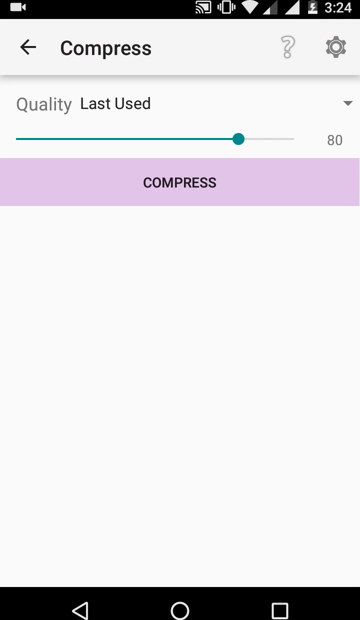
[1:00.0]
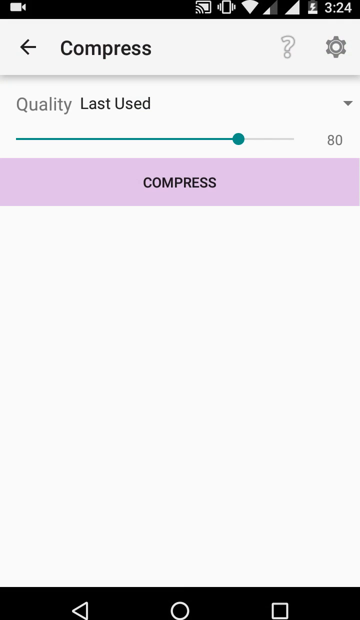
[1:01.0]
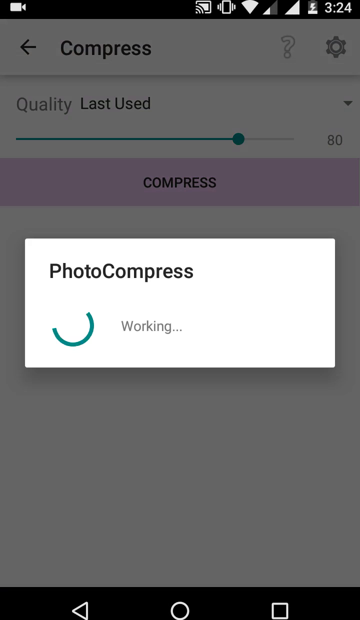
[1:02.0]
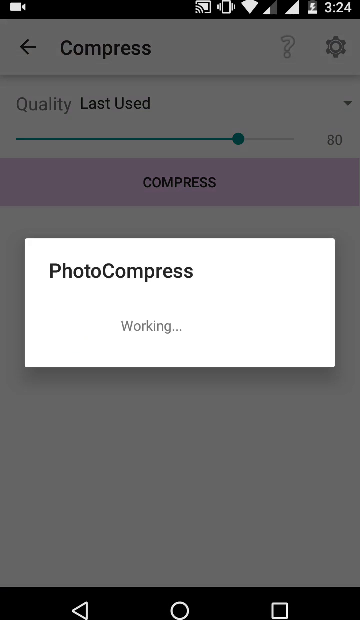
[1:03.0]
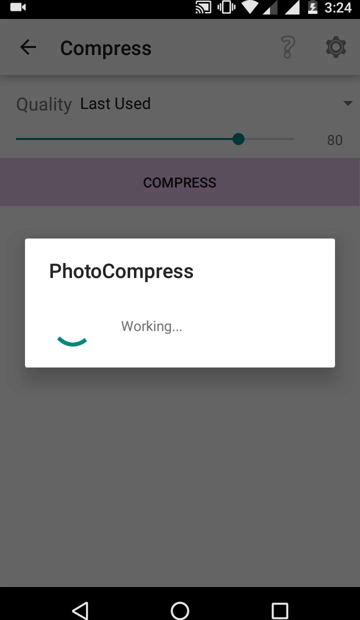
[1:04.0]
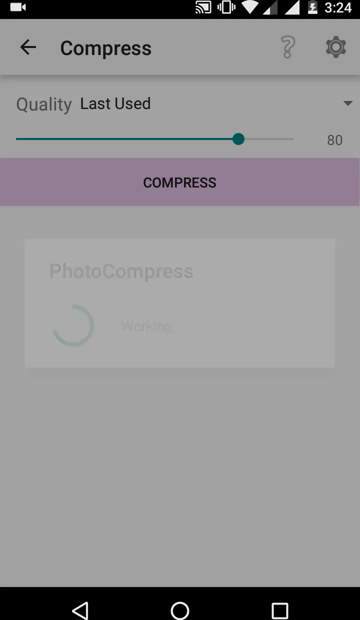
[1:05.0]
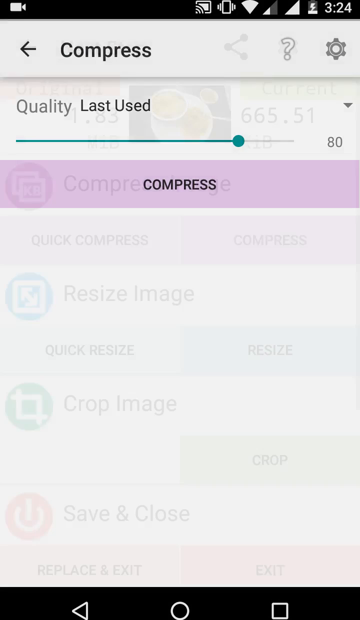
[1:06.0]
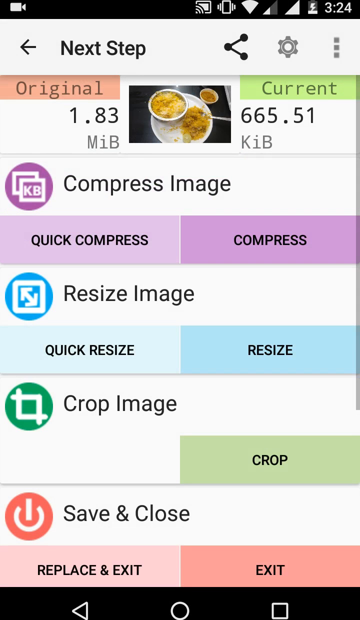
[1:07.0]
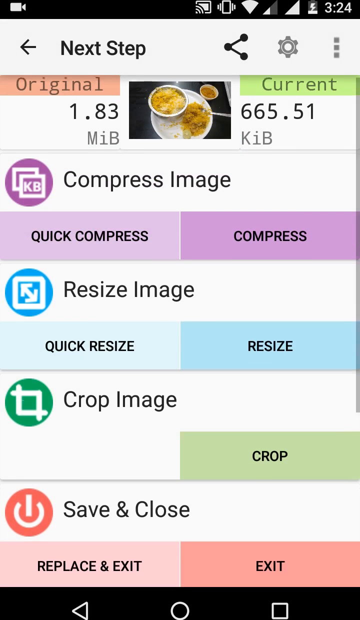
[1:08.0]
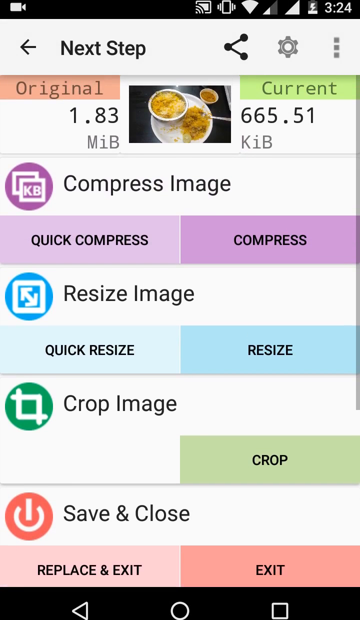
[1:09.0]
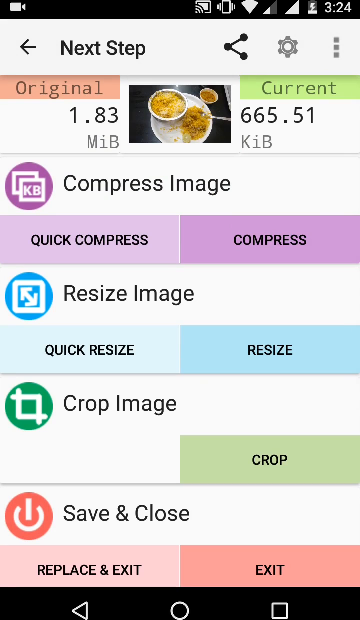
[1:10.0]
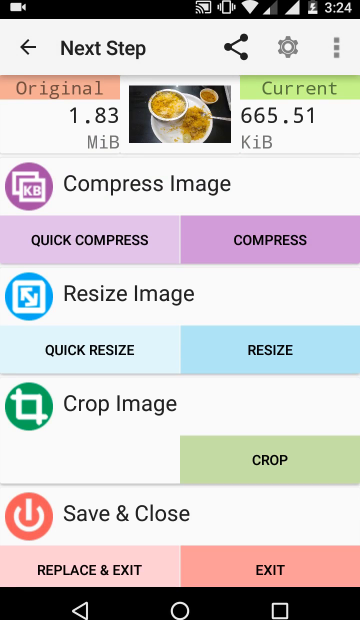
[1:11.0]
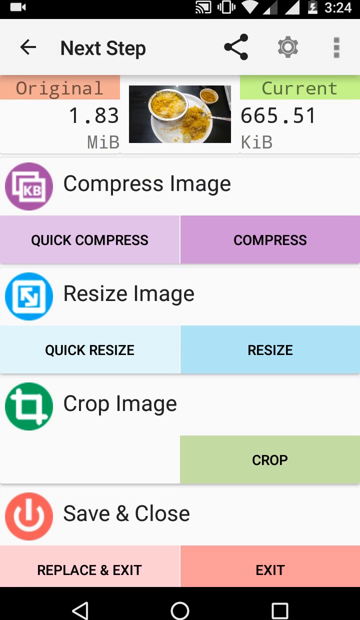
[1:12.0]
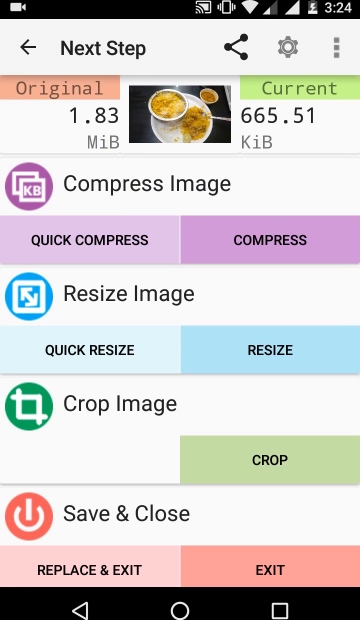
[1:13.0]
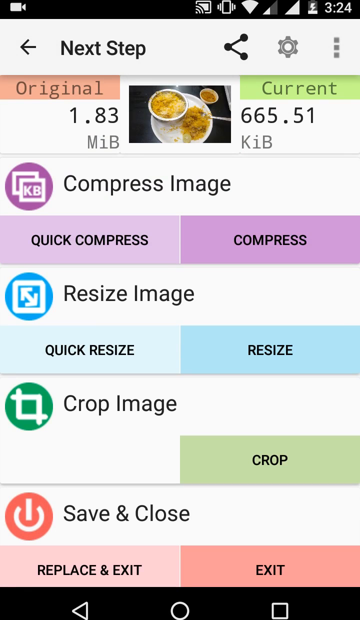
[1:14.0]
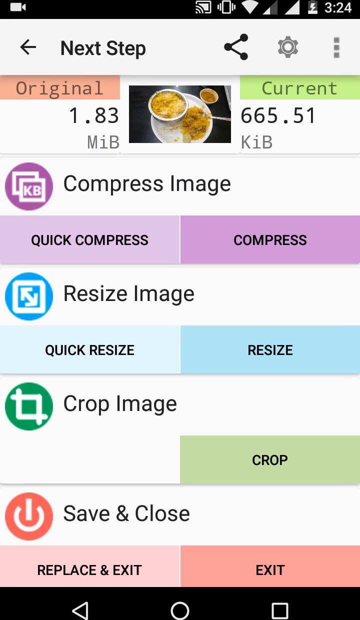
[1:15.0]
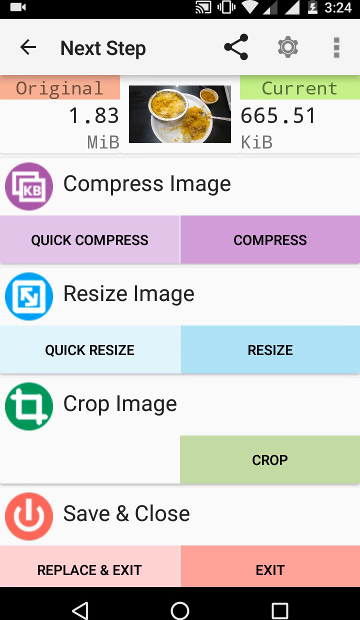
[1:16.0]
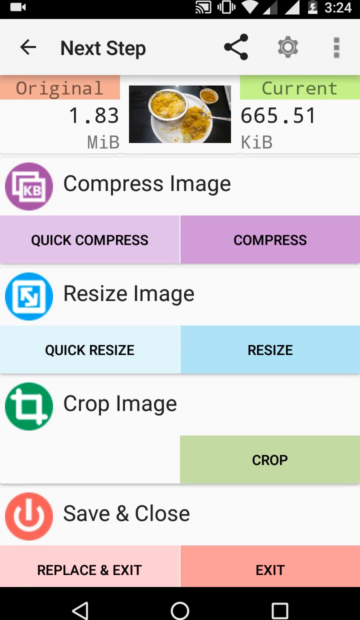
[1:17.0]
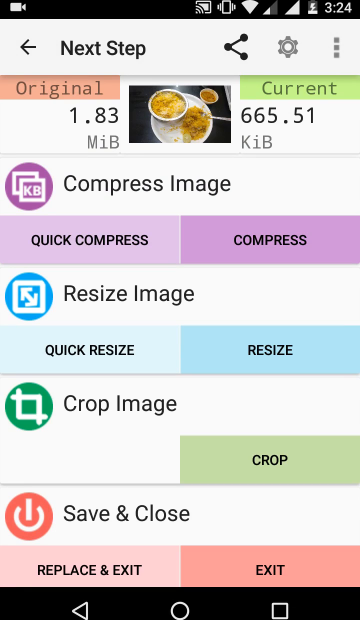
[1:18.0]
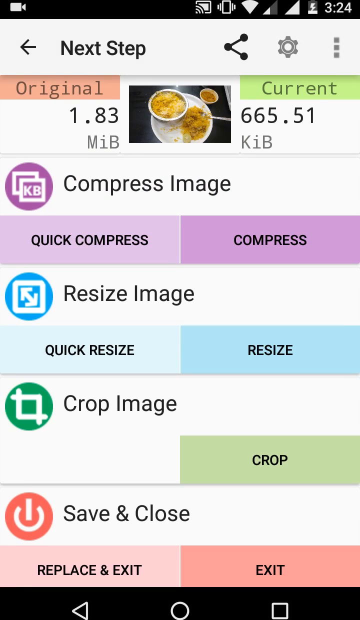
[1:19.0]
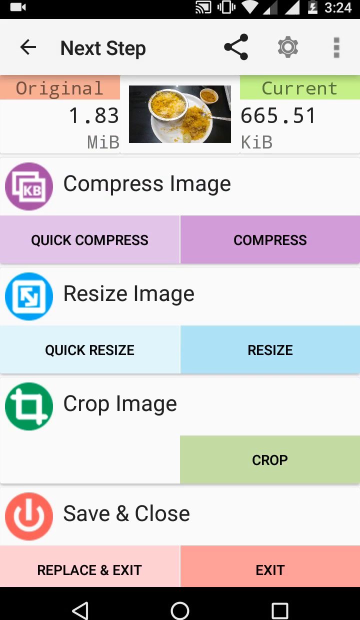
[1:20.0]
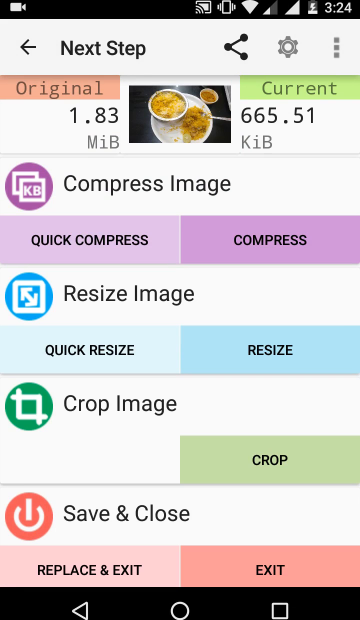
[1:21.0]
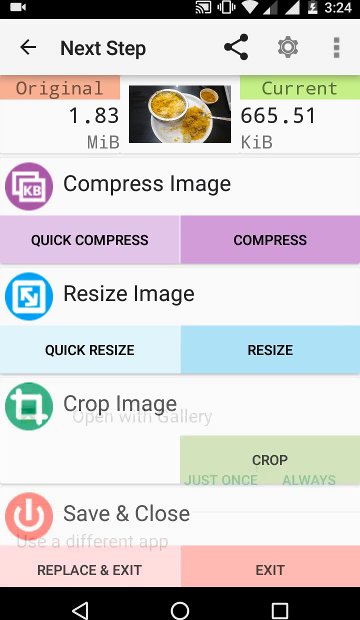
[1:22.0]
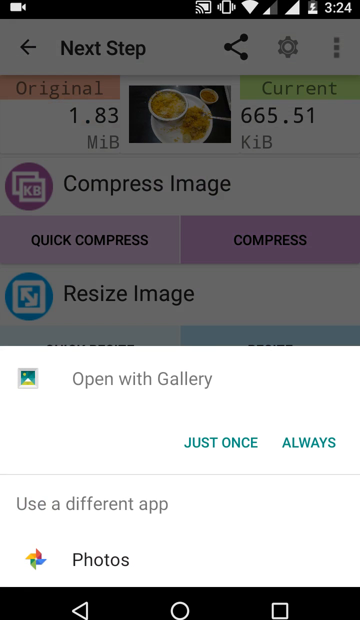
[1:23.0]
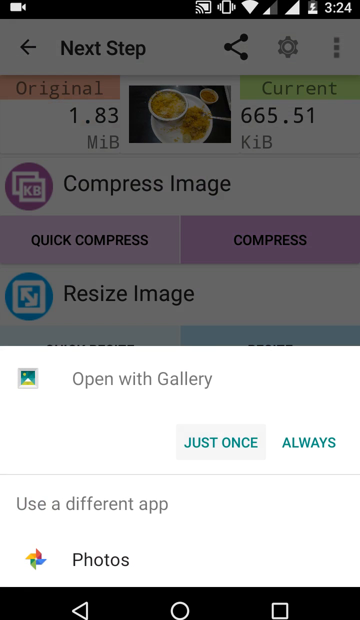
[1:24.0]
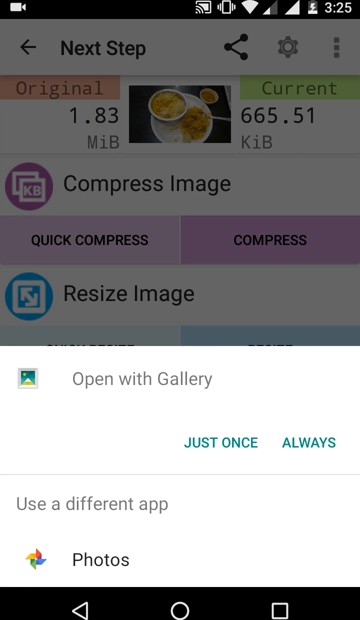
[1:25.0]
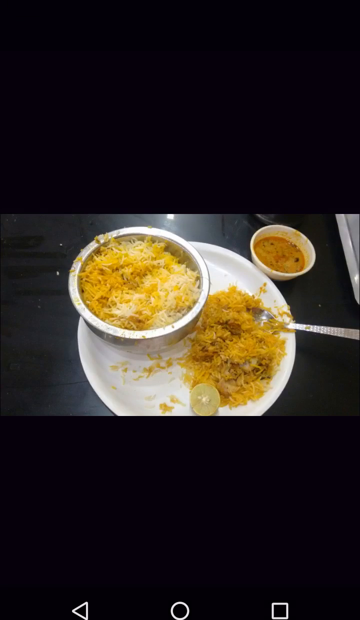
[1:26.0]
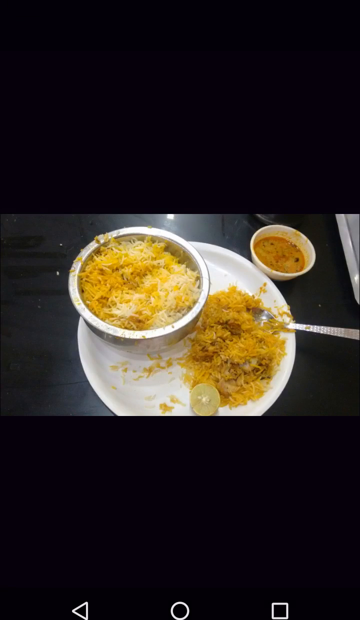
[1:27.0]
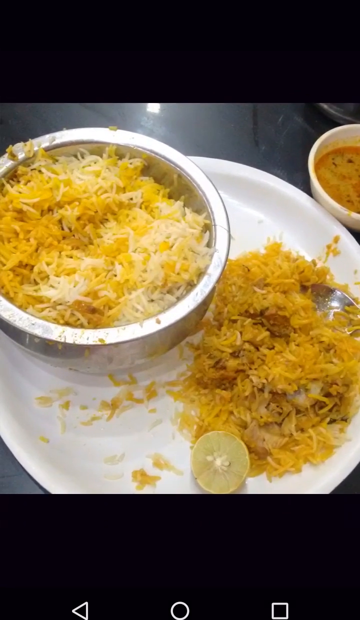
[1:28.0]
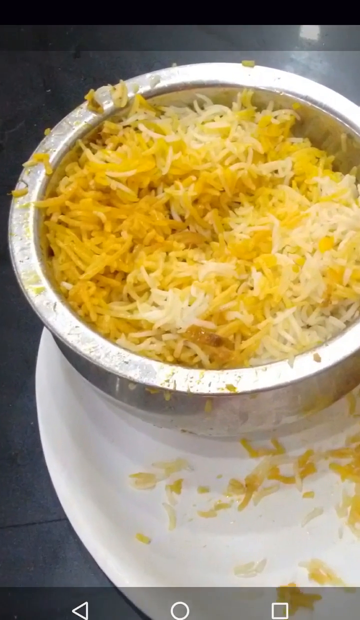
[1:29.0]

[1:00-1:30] The Photo Compress app is shown working, step by step: a picture is selected, the image is compressed, resized and cropped, and then saved and closed. There is an option to open with the gallery, and the cropped picture is shown. The app also shows the last time it was used and a bar that moves. There is a "compress" button to press to start the editing.